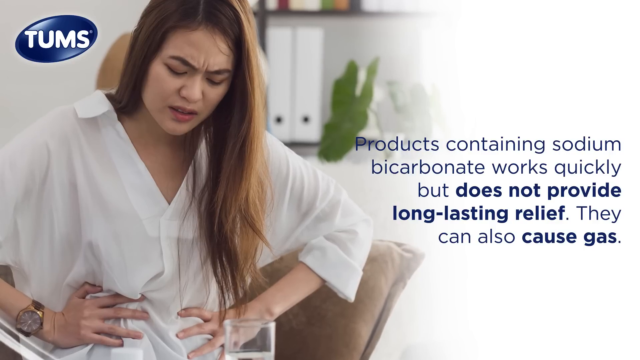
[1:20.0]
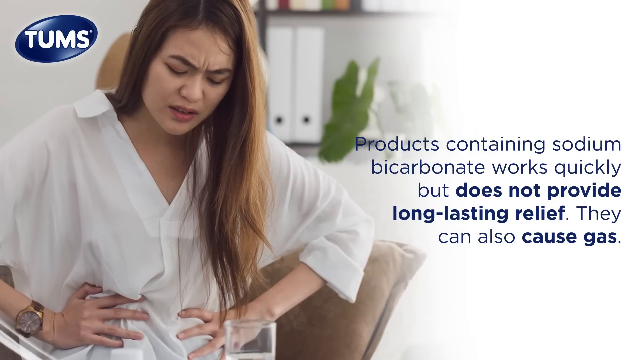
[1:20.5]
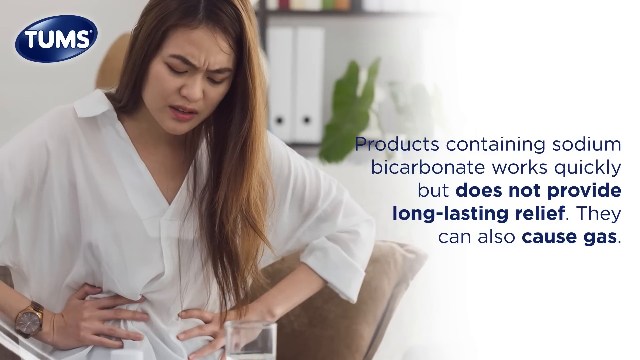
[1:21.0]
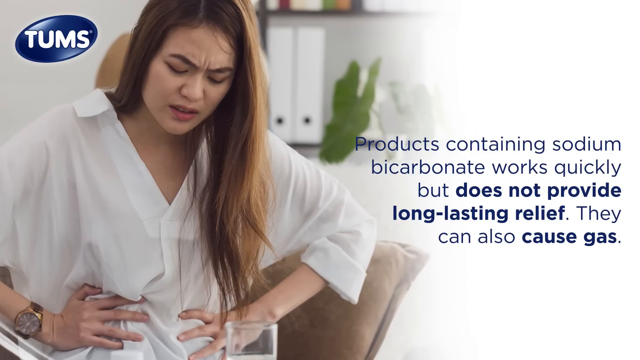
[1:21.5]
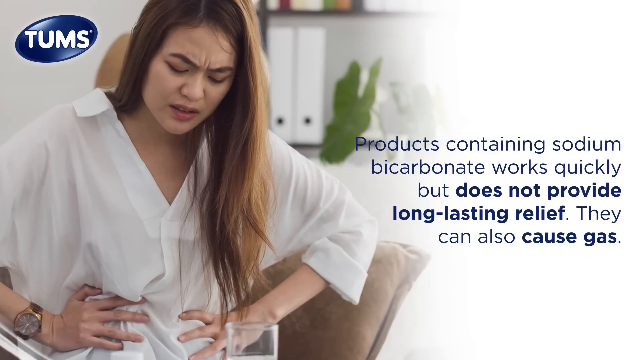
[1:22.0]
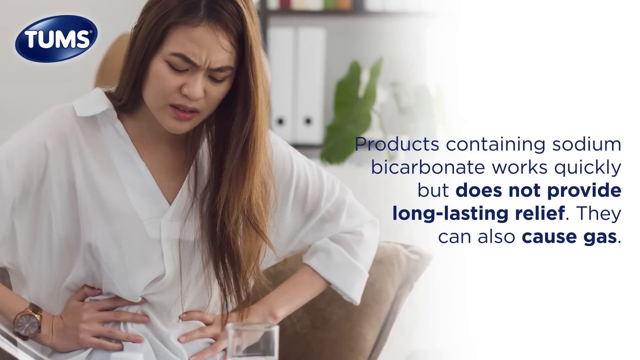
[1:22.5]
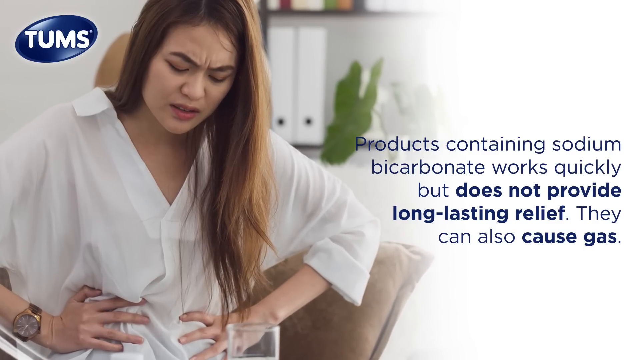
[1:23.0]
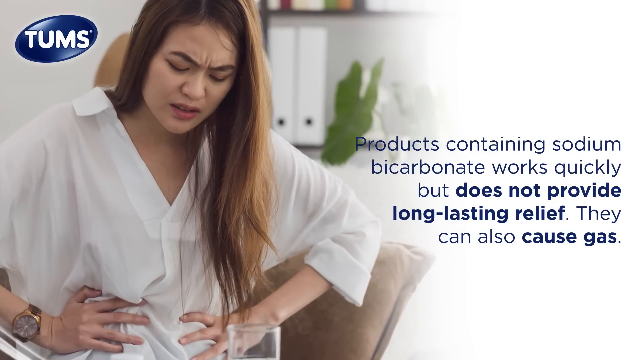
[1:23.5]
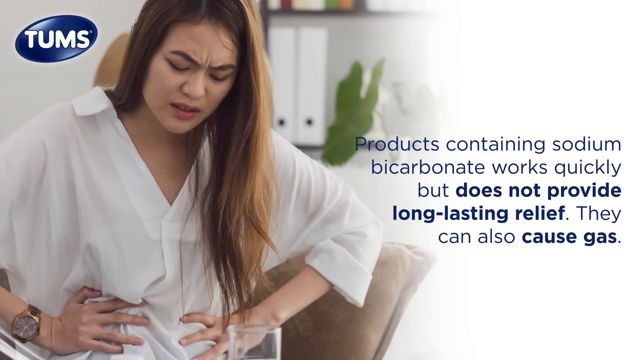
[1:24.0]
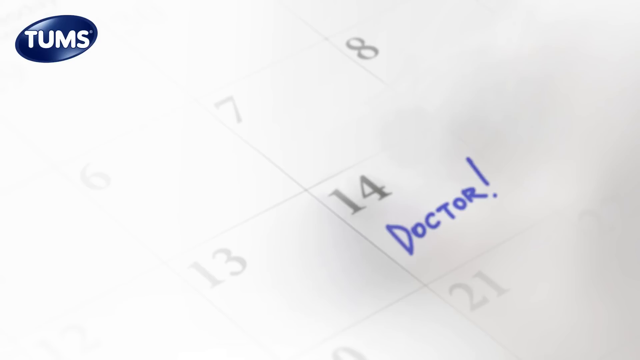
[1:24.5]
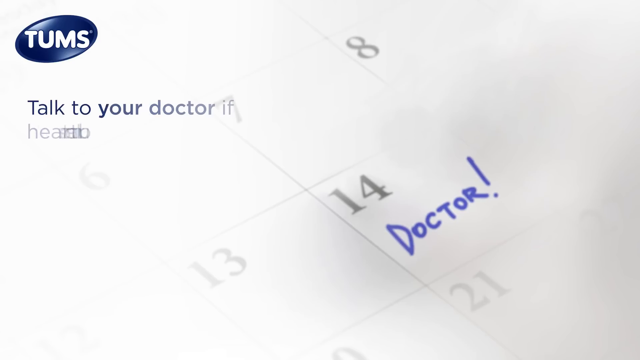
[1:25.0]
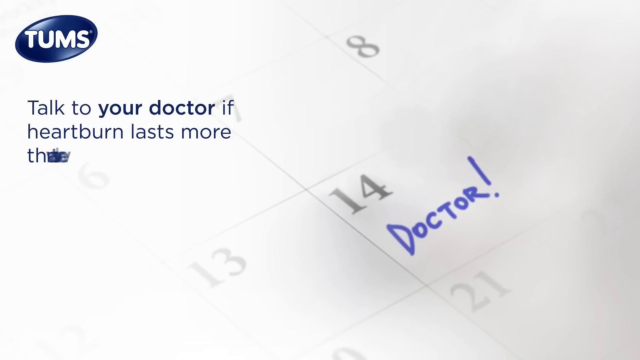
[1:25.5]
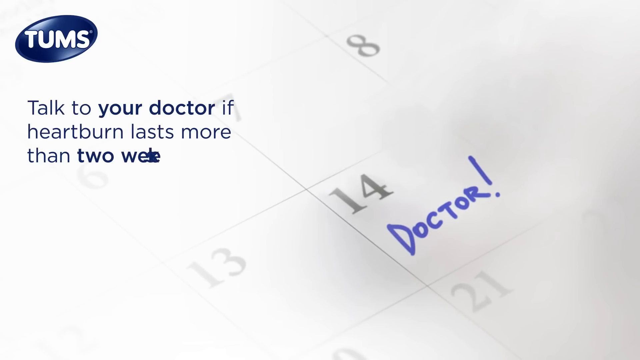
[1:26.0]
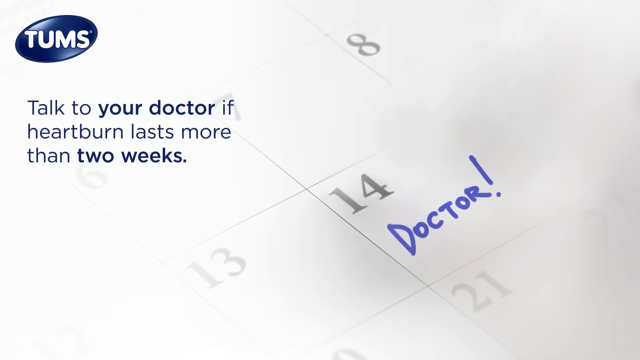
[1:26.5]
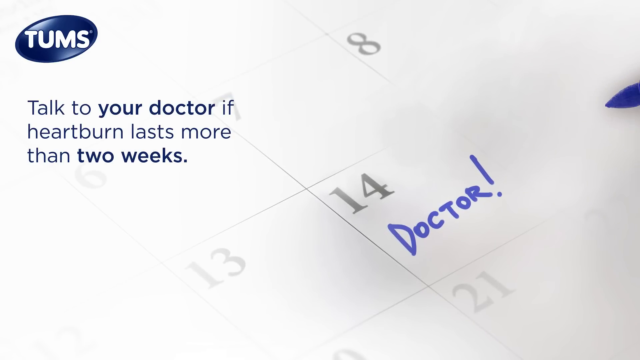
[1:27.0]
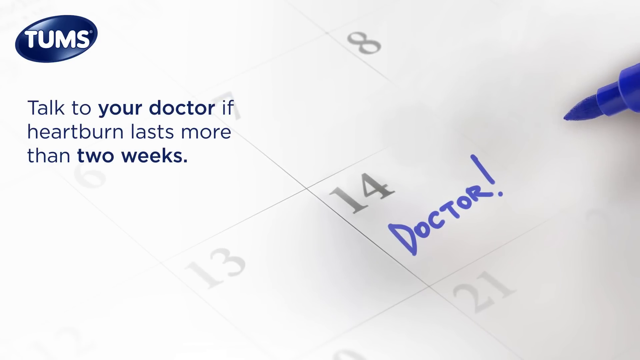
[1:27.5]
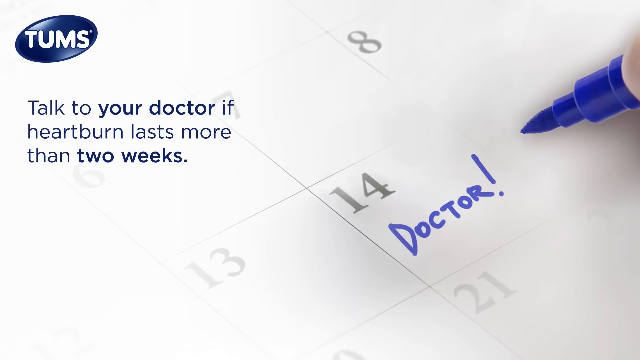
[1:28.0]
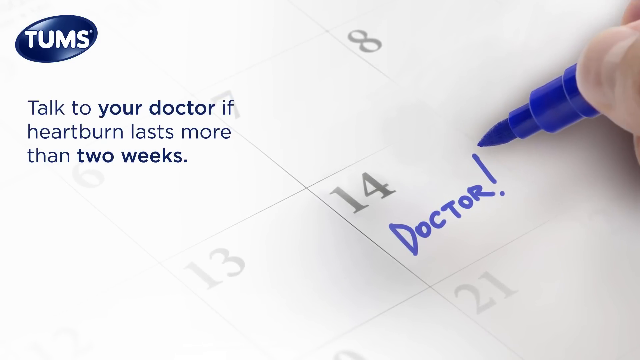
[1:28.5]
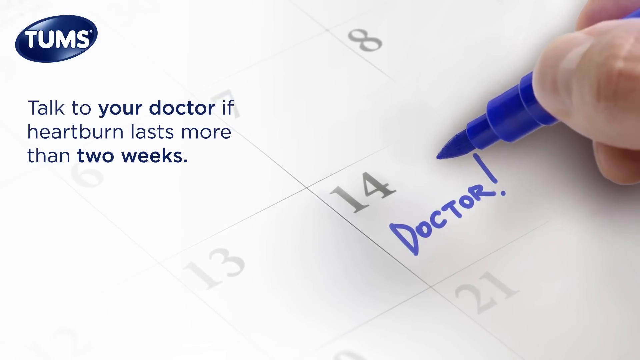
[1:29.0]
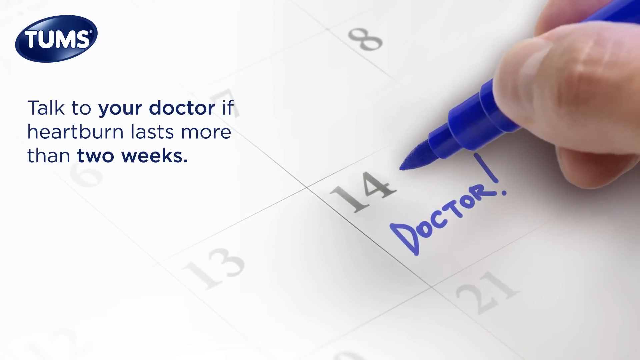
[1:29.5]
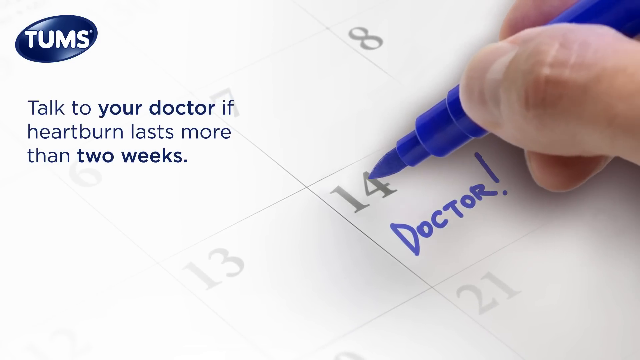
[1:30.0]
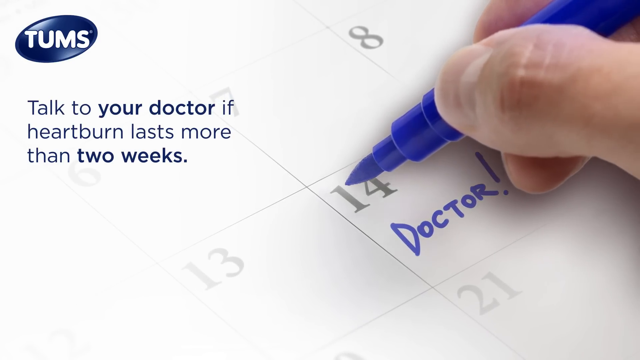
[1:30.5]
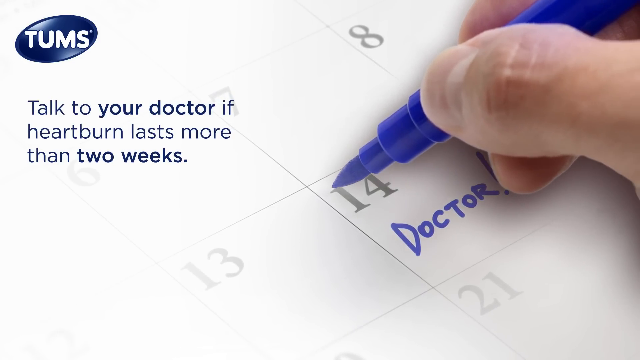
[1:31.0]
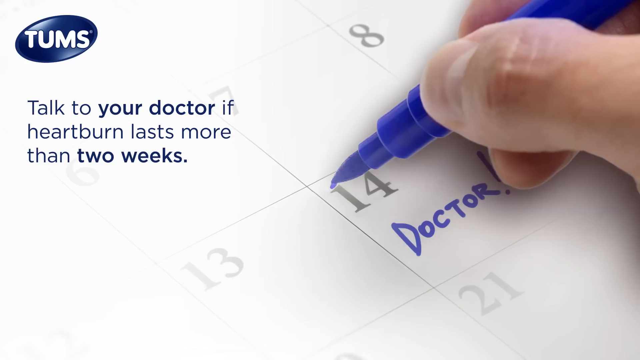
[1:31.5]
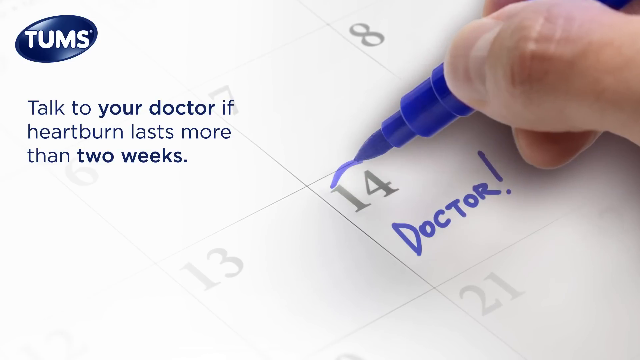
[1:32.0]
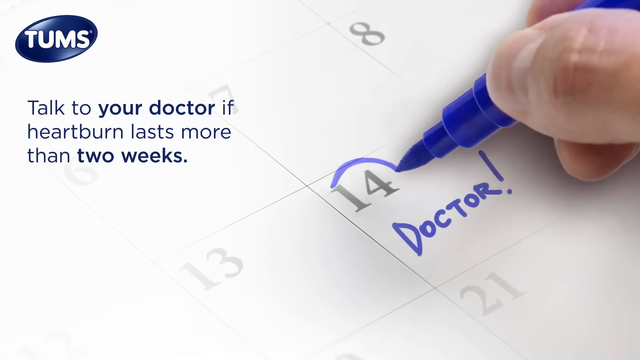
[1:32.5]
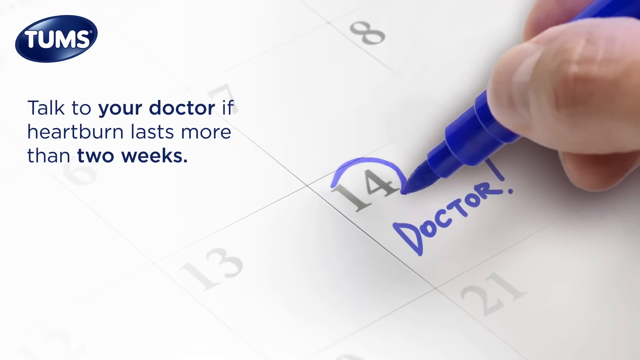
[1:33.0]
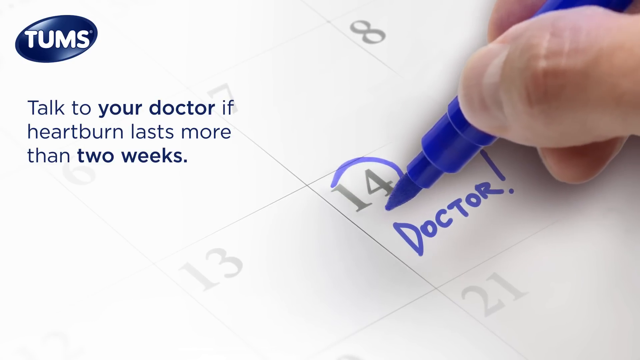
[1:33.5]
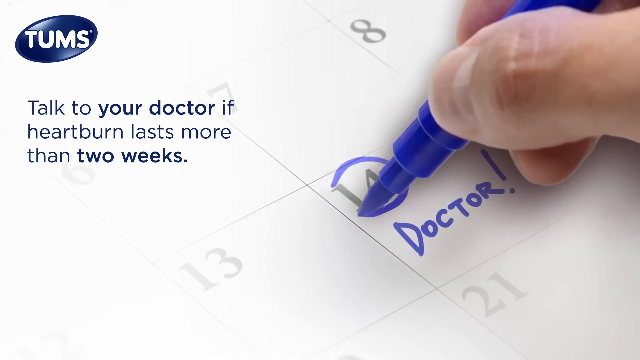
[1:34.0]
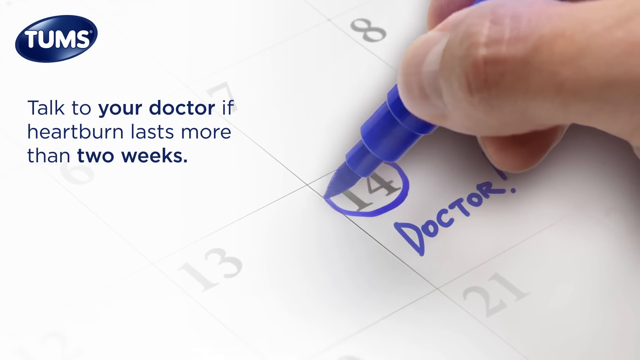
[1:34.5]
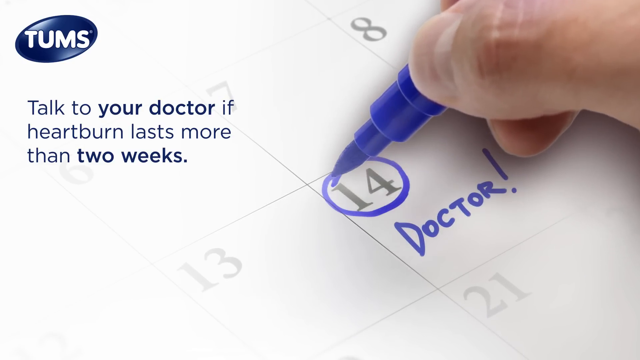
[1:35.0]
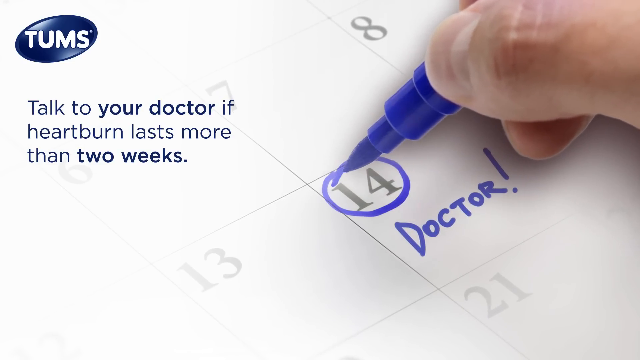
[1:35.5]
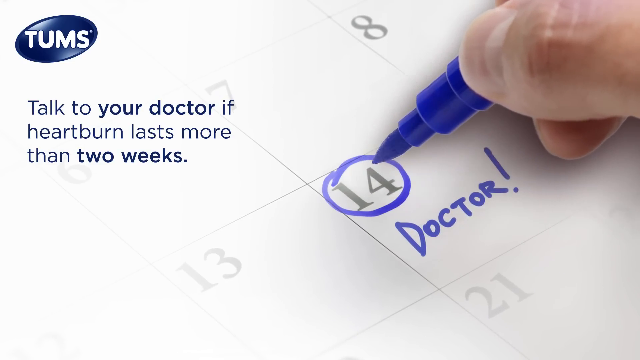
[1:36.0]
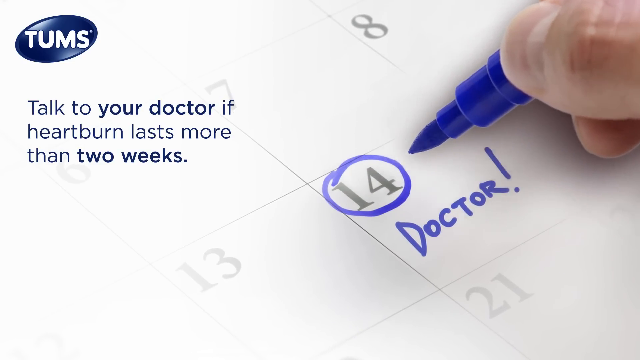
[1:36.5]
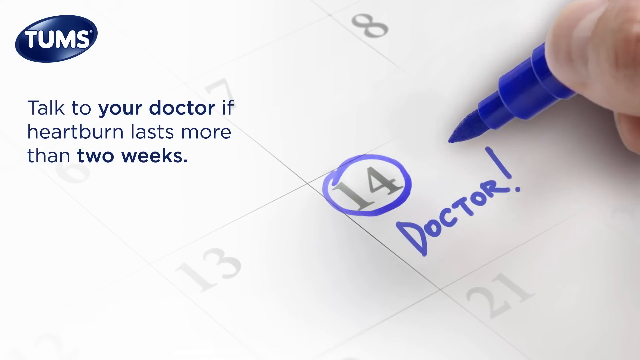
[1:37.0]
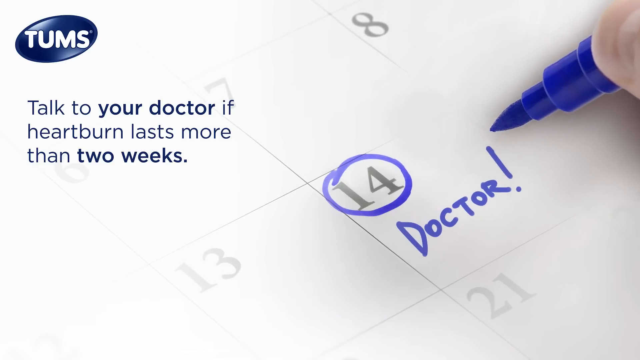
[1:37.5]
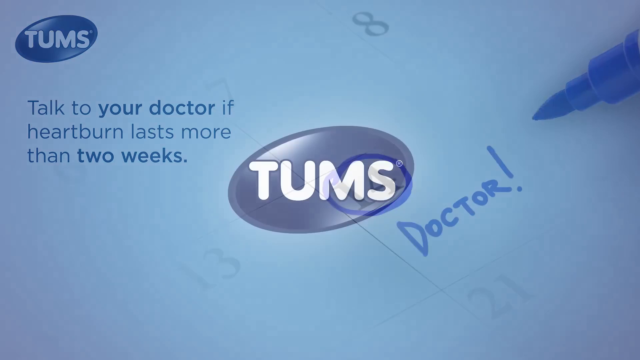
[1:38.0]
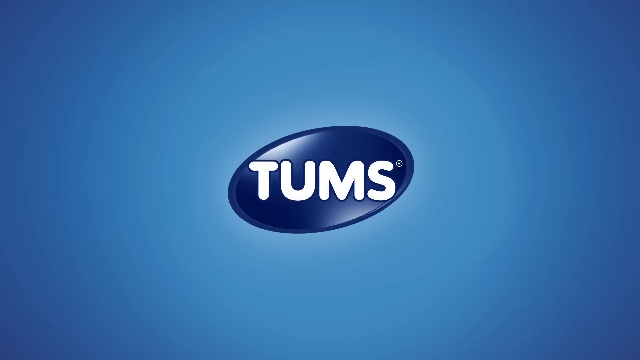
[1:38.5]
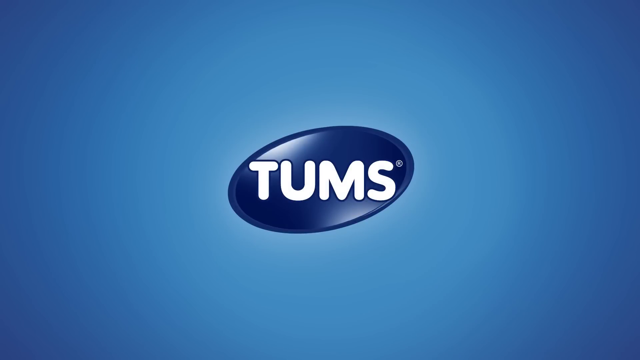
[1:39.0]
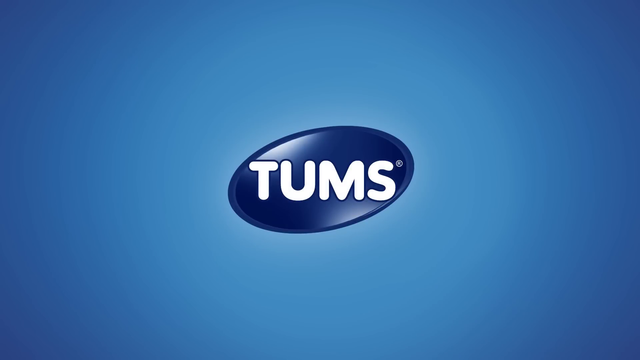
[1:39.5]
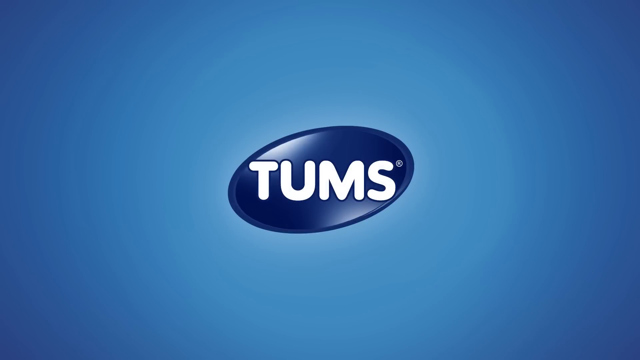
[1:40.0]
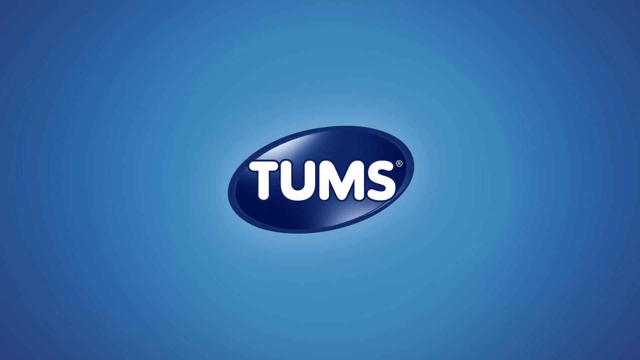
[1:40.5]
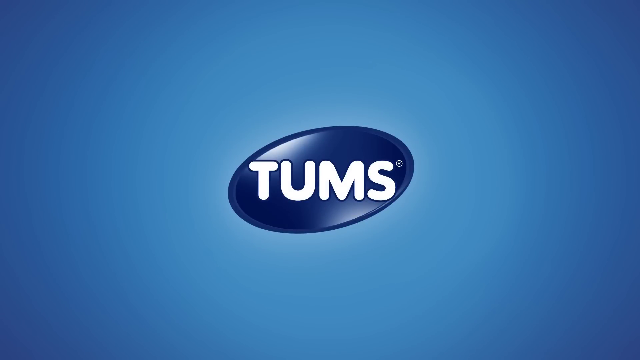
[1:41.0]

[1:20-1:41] The Tums logo is at the top left, and a woman holds her stomach. She wears a long white shirt and has medium, chest-length hair. On the right, blue text reads "products containing sodium bicarbonate works quickly, but do not provide long-lasting relief. They can also cause gas," with "does not provide long-lasting relief" and "cause gas" in bold. The picture of the woman slowly zooms in. Then what appears to be a calendar comes up in the background, with "doctor!" written on the 14th, which is mostly what is in view. Text pops up on the left-hand side reading "talk to your doctor if heartburn lasts more than two weeks." A person's hand comes down with a marker and circles the 14th in blue. The marker pulls away, and the Tums logo pops up on a blue background.